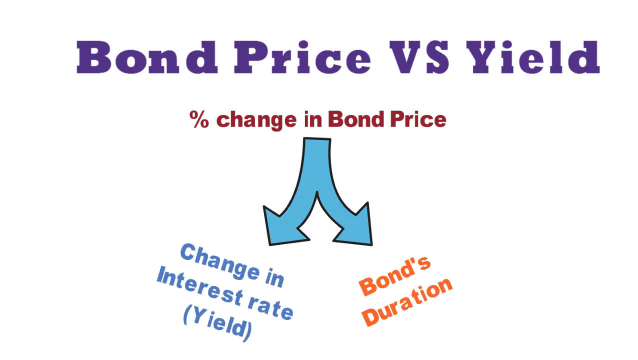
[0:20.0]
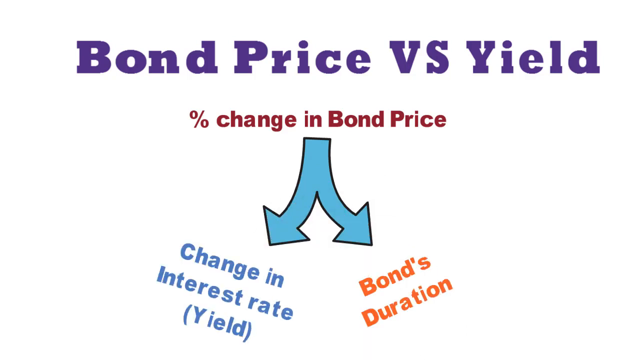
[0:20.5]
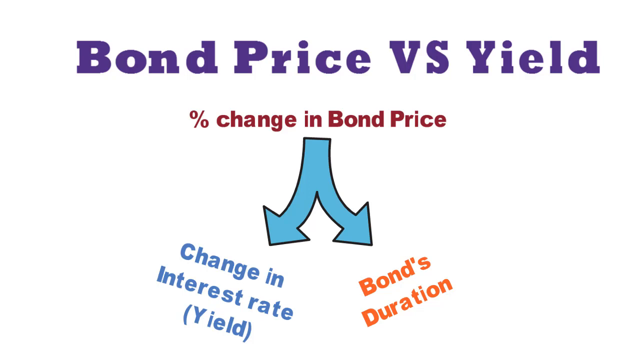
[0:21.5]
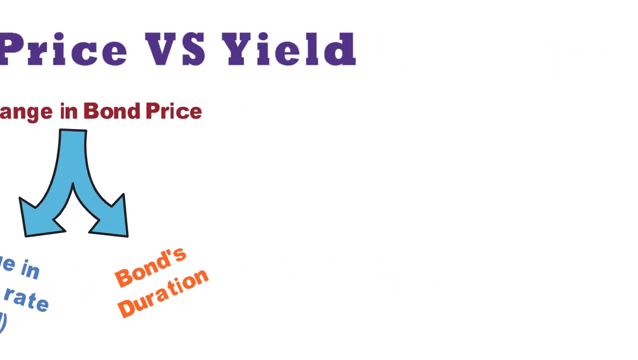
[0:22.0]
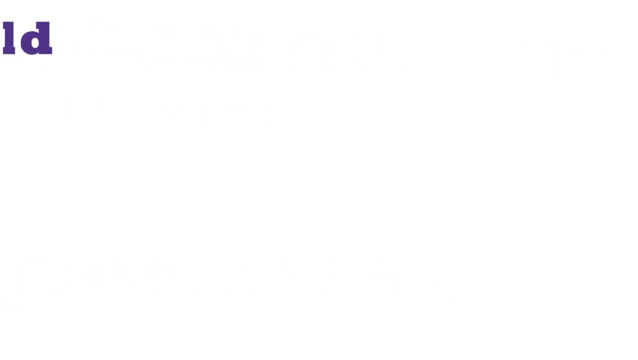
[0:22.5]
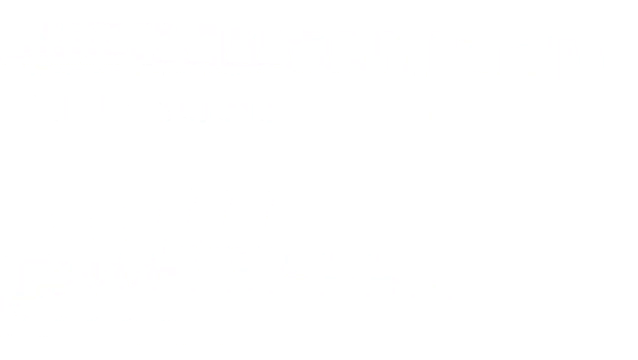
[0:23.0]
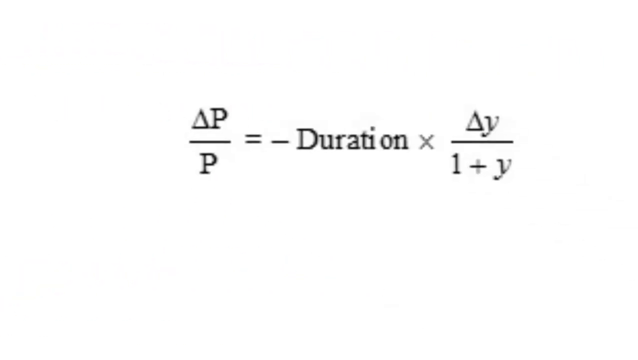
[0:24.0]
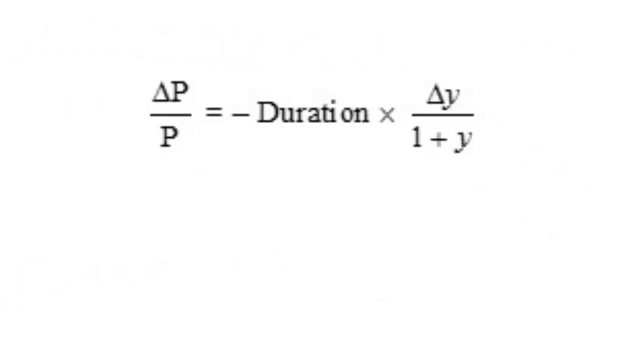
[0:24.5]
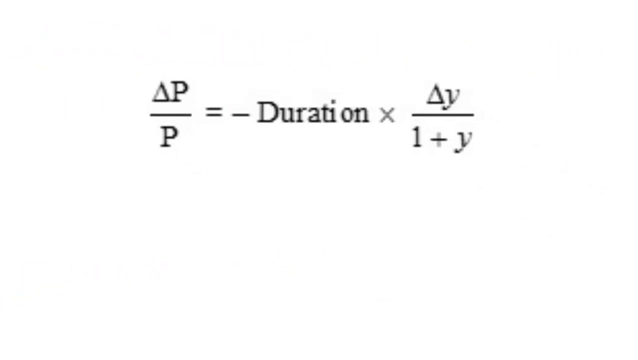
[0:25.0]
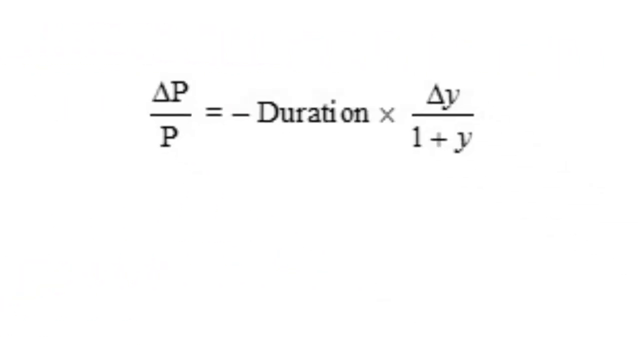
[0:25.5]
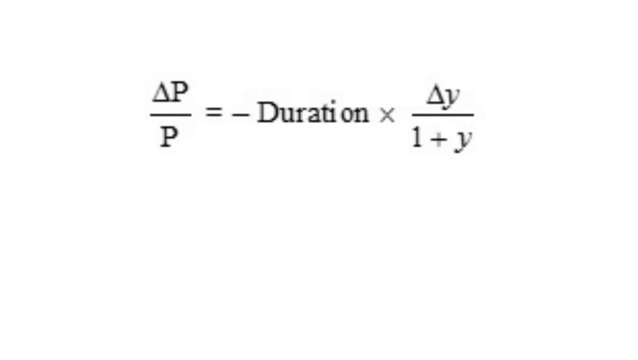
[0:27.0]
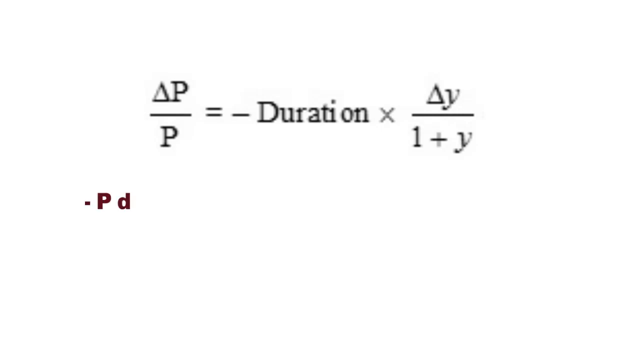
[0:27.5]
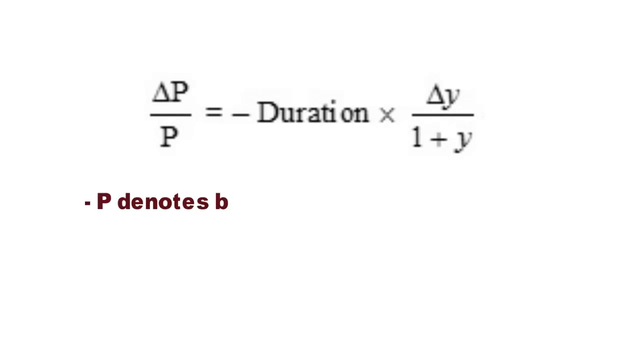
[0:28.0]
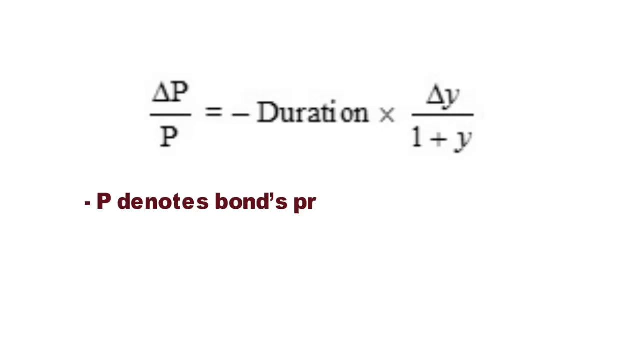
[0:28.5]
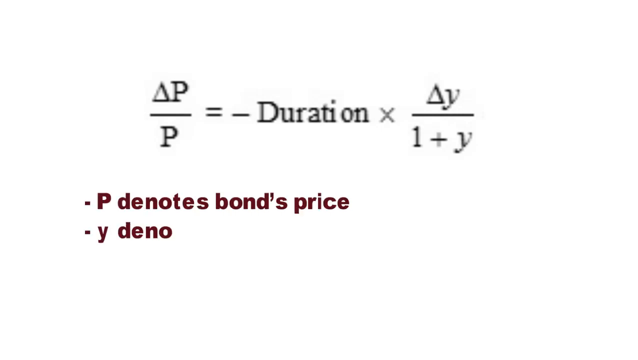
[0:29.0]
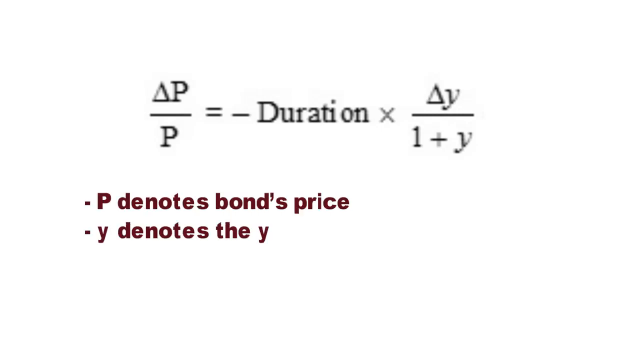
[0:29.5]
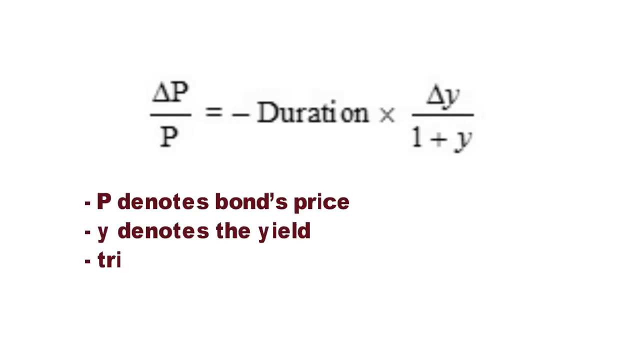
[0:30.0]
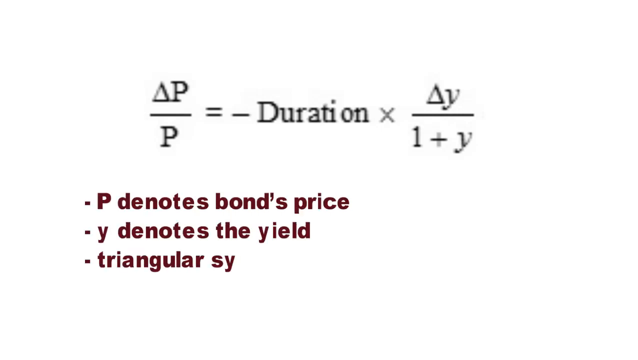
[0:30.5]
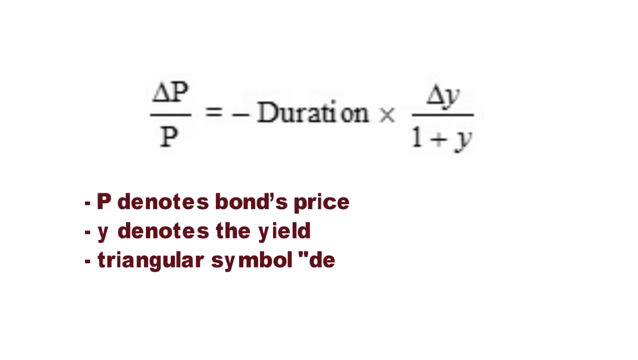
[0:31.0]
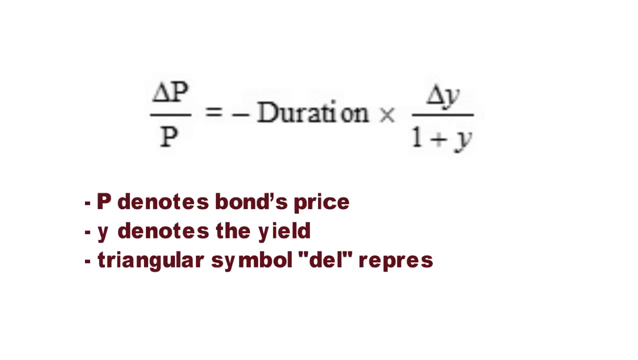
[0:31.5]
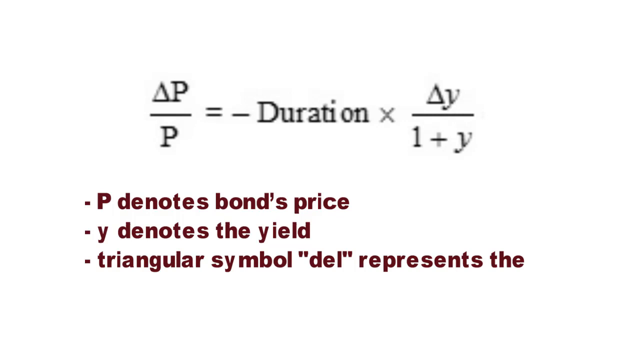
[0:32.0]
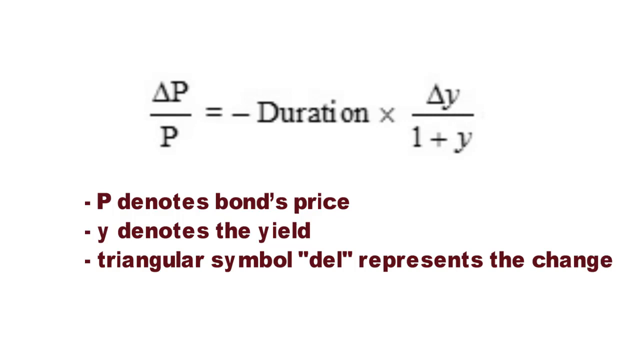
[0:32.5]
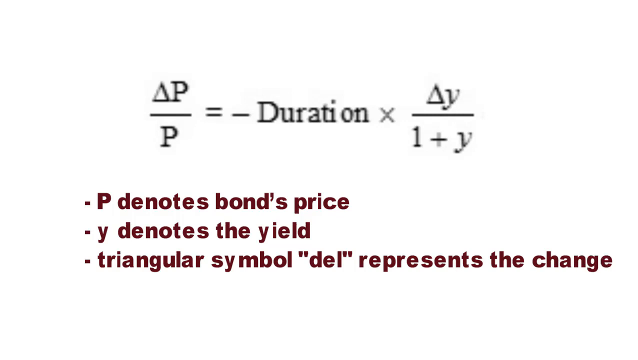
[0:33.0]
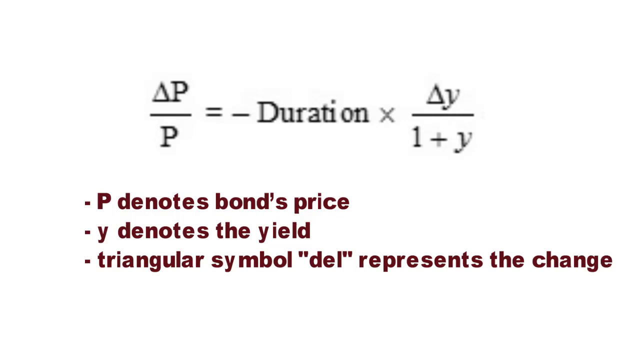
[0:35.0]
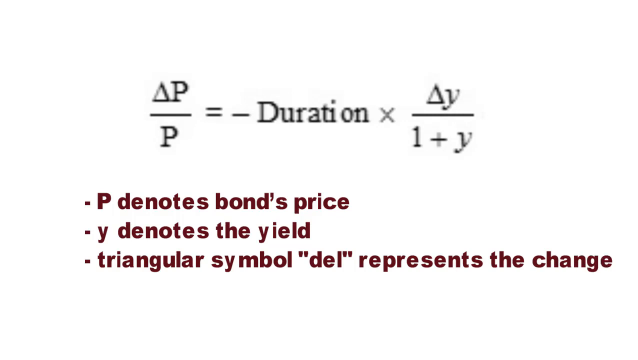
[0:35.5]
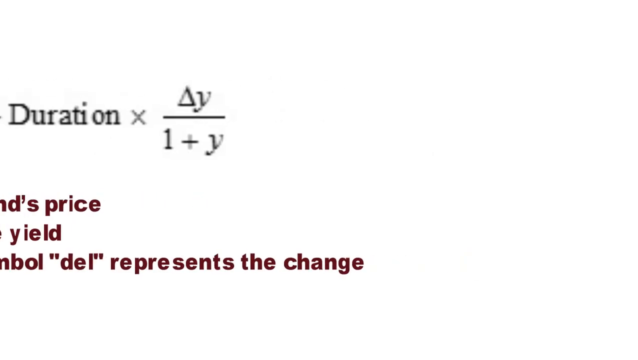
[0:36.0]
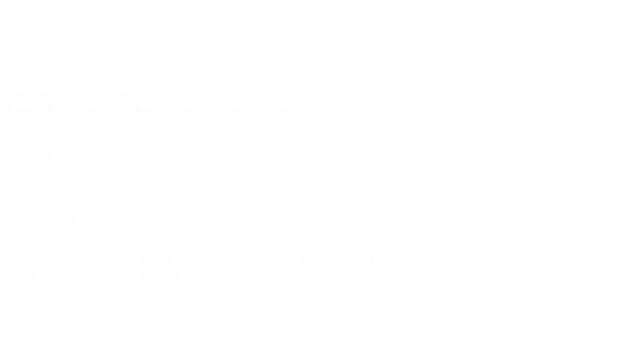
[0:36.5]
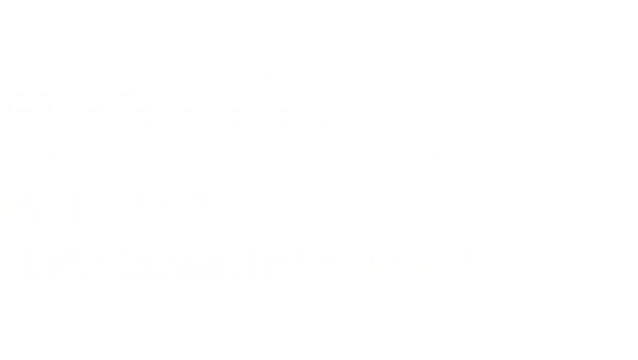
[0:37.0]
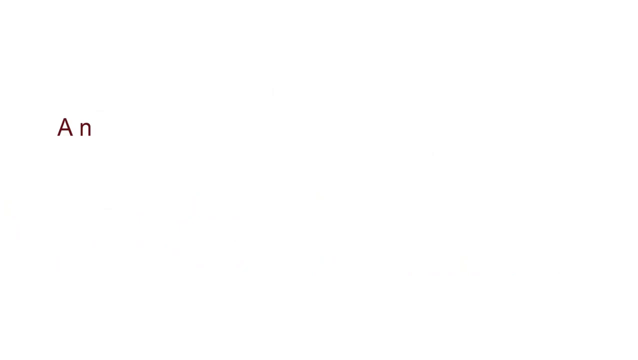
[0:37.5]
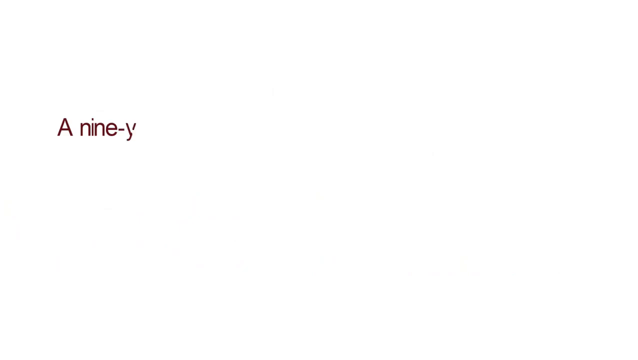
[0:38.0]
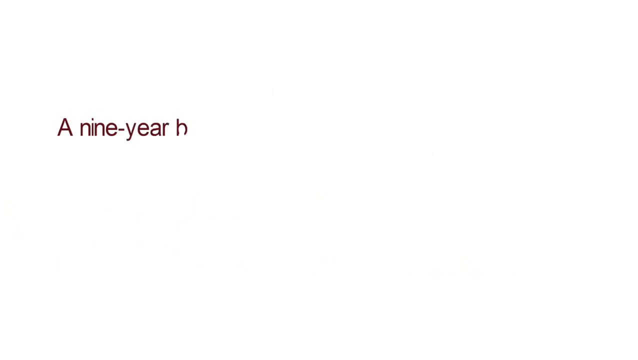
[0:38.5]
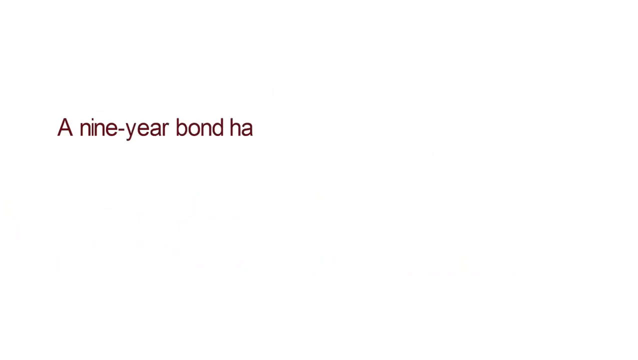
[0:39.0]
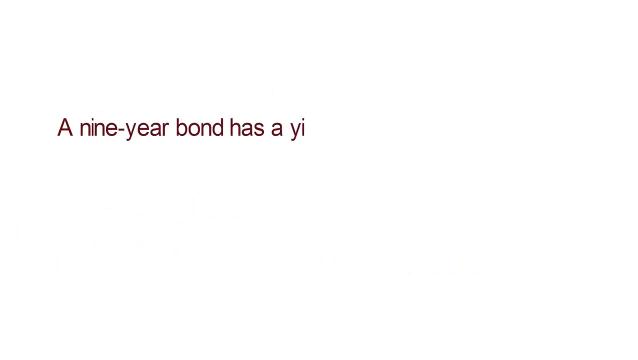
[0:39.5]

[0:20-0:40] The screen continues to show the purple "bond price vs yield" title and the percent change in bond price, with the change in interest rate and the bond's duration. It then transitions to another screen with a white background showing a sort of equation: a symbol p over p equals duration times changes in y. Red text on this screen says that p denotes the bond price, y denotes the yield, and the triangular del symbol represents the change. More red text then appears reading "a 9 year bond has a yield of" before it cuts off. No people or animals are shown.